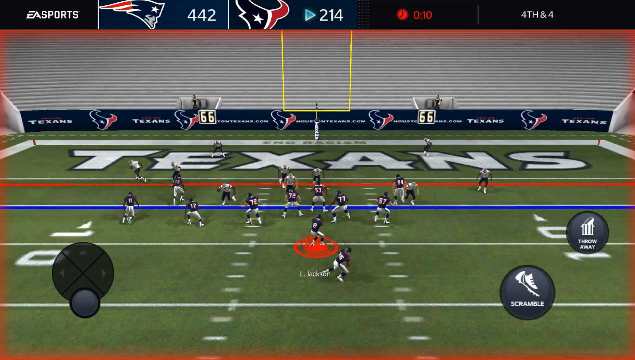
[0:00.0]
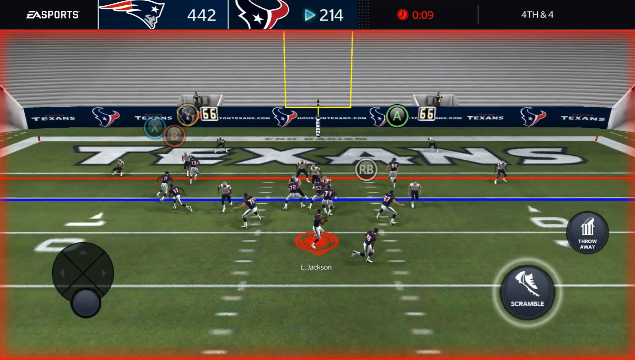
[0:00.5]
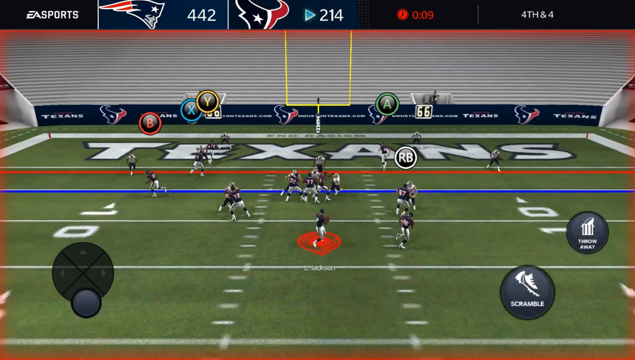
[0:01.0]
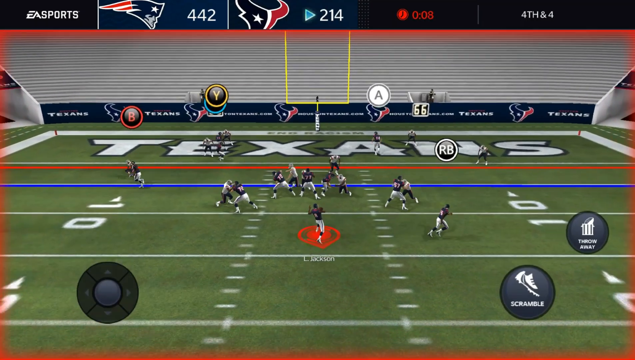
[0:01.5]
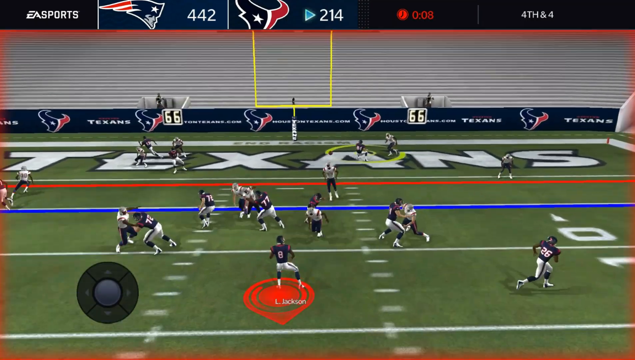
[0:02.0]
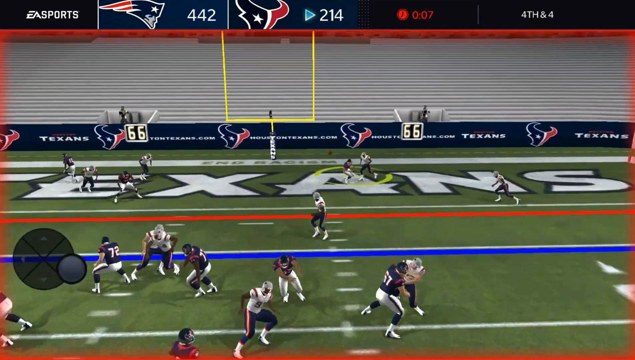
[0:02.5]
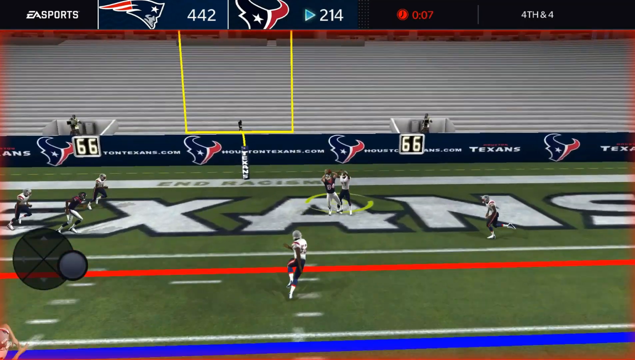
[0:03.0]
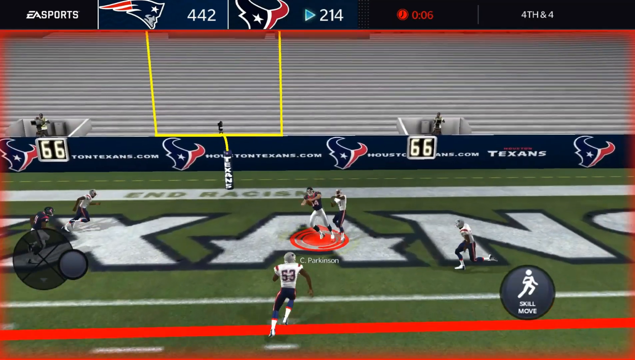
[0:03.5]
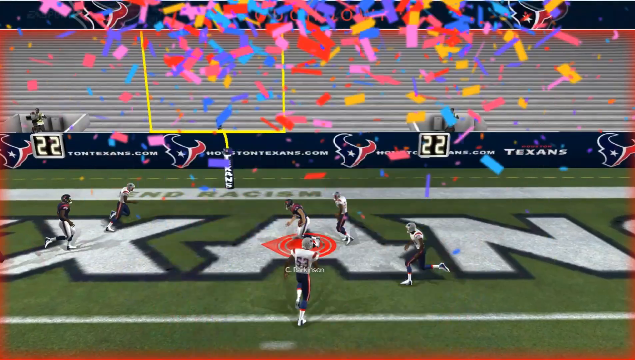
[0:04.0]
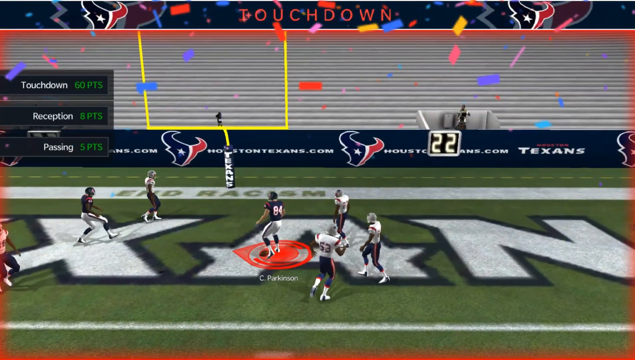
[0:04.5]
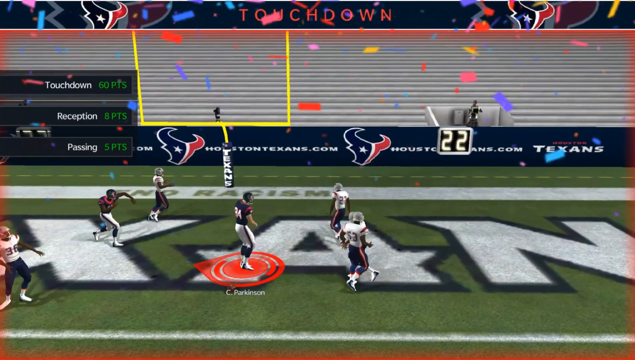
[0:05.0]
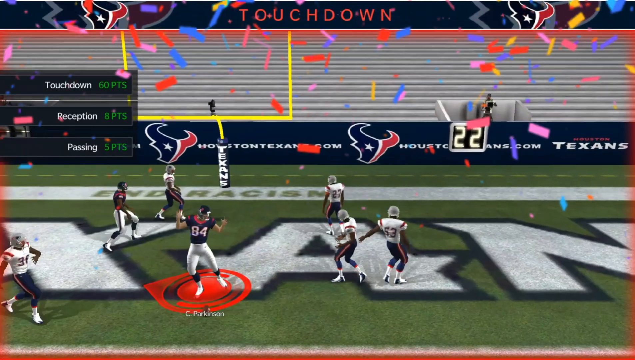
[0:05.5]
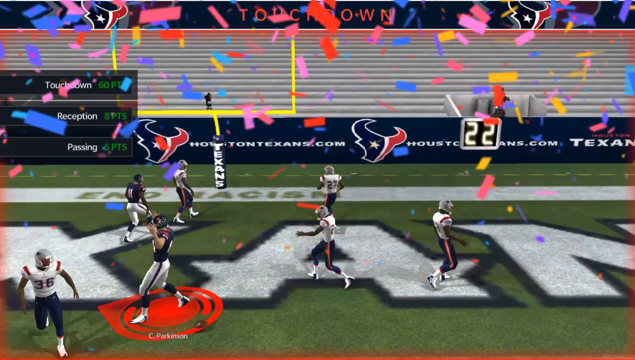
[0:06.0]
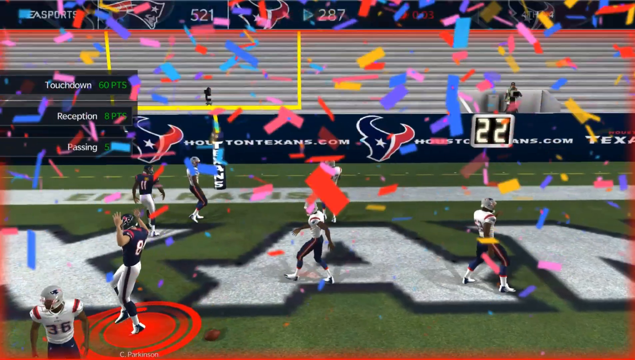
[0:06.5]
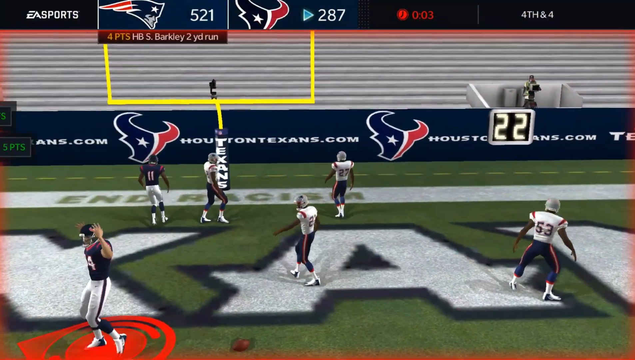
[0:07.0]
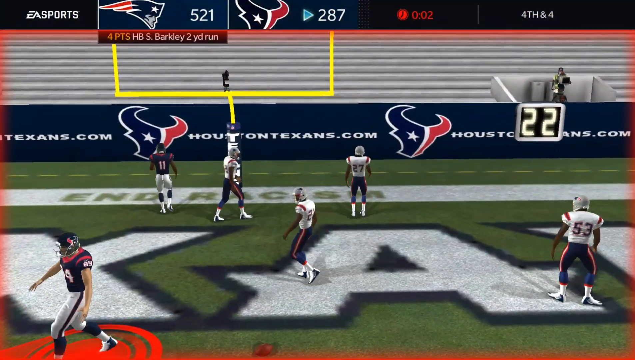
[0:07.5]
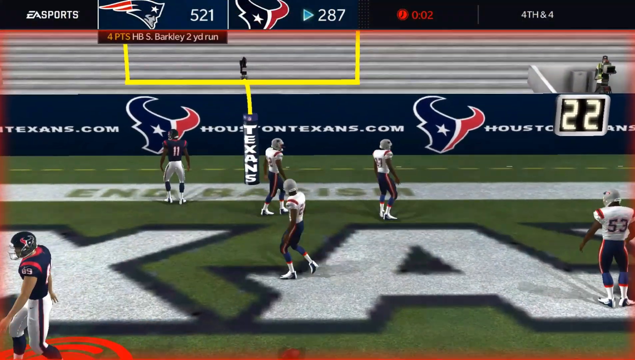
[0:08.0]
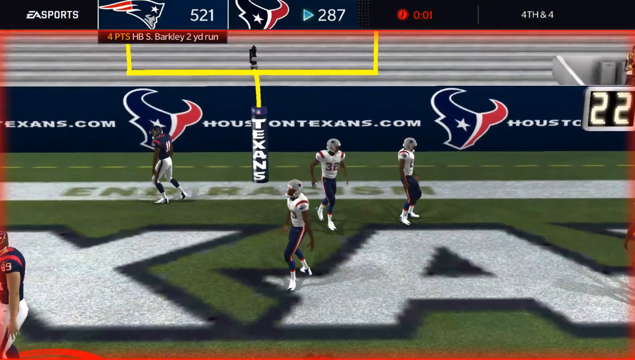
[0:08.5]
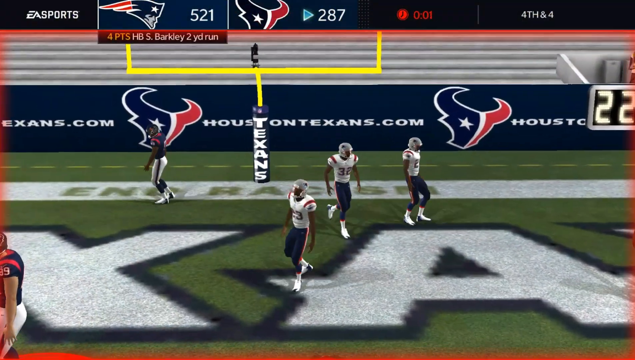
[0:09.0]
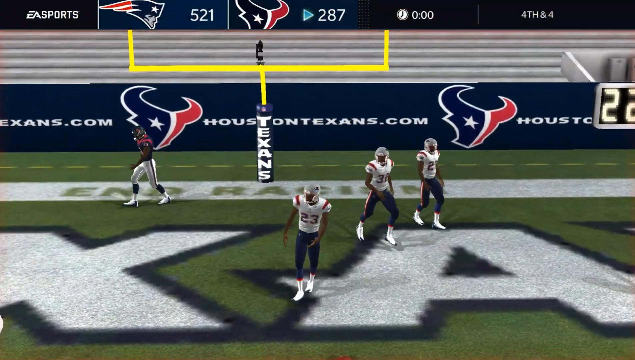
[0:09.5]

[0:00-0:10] Someone is playing an official-looking NFL (National Football League) video game. At the very top of the screen, the publisher text reads "EA Sports" on the user's UI. The two teams in the match are the Houston Texans and the Patriots, with the score reading 5-2-1 for the Patriots and 2-8-7 for the Texans. The Patriots have intercepted the football from the Texans, and the players on the field walk around very disappointed while the player who made the interception celebrates.